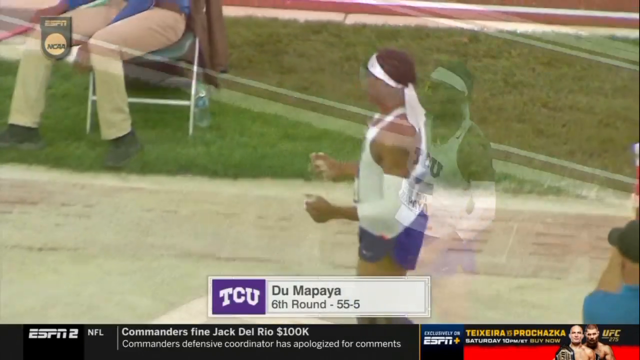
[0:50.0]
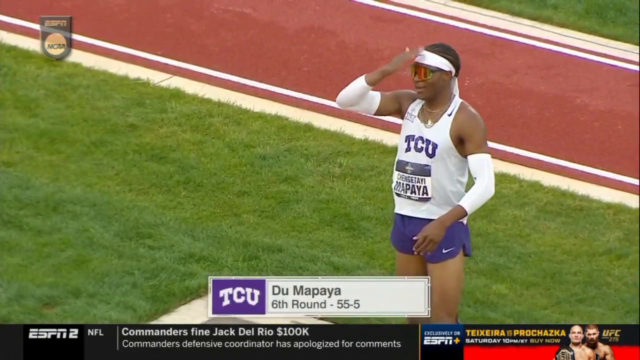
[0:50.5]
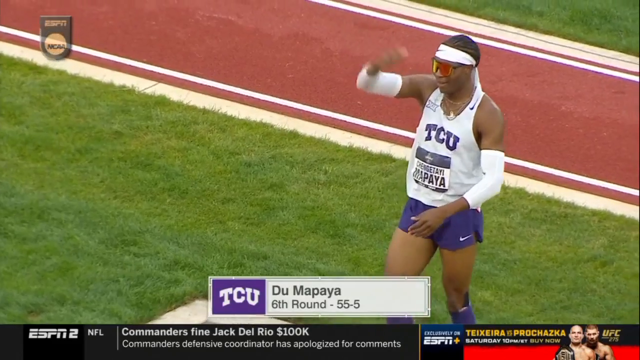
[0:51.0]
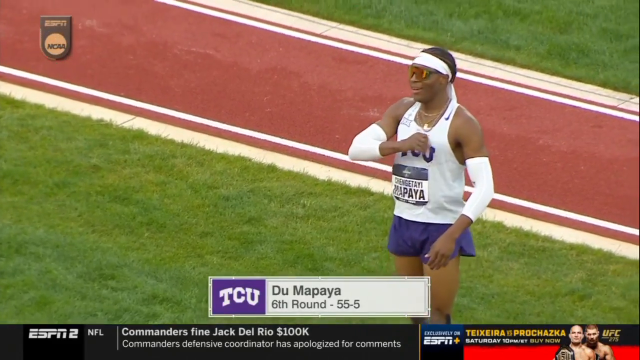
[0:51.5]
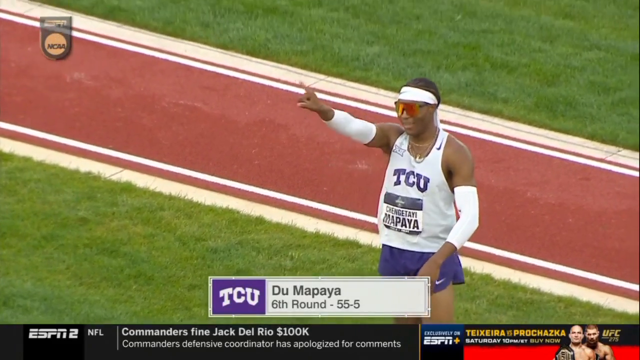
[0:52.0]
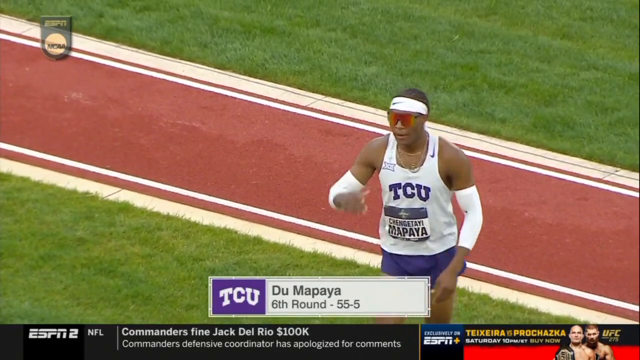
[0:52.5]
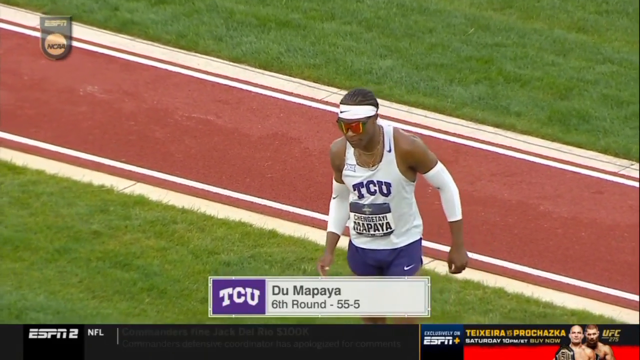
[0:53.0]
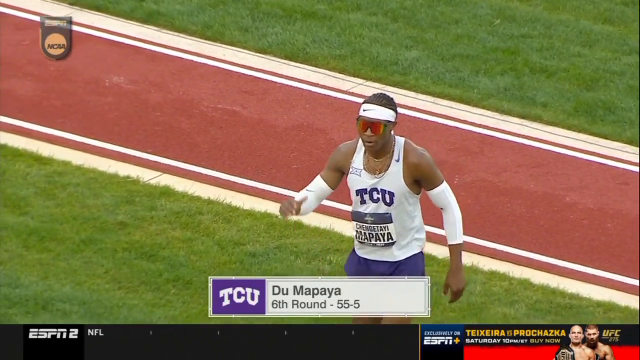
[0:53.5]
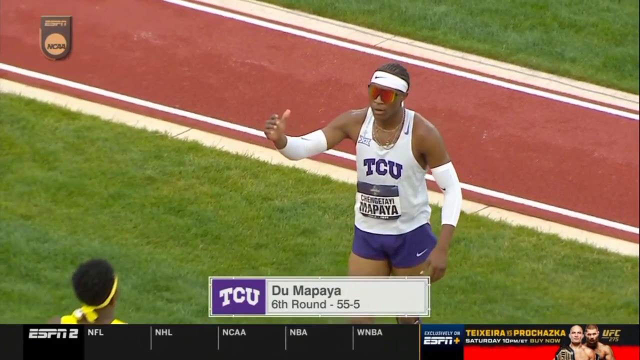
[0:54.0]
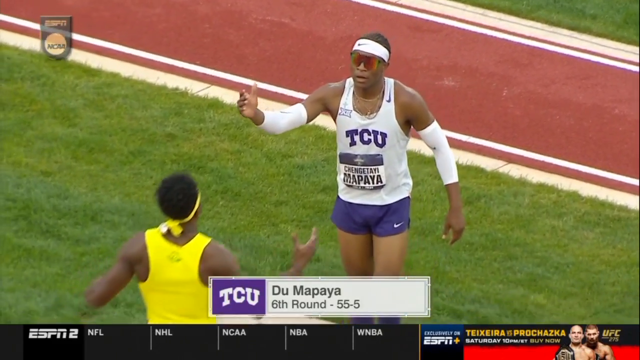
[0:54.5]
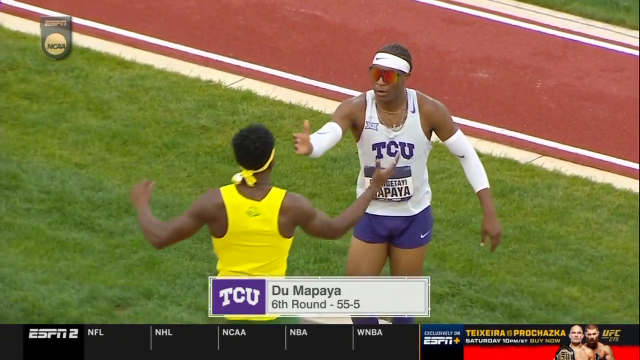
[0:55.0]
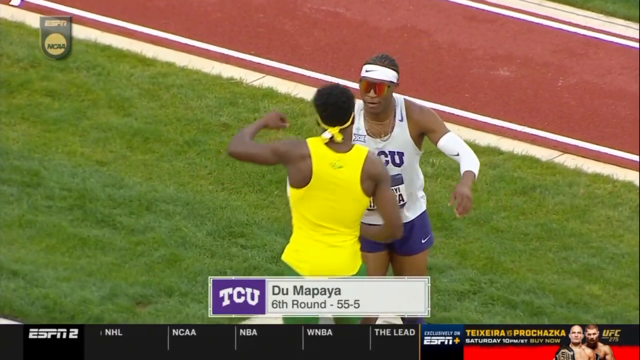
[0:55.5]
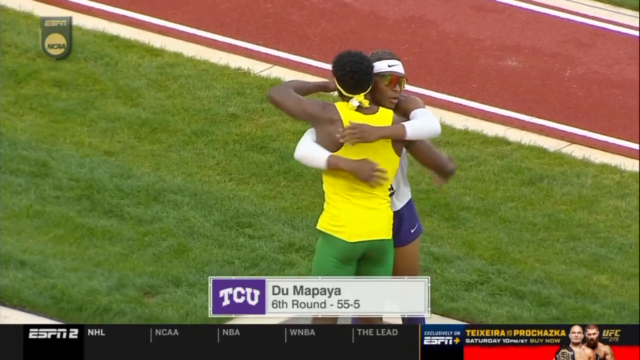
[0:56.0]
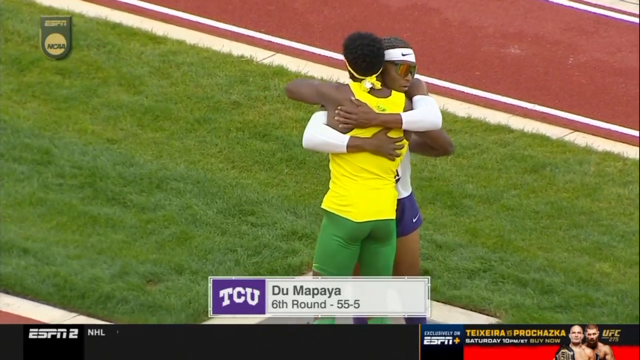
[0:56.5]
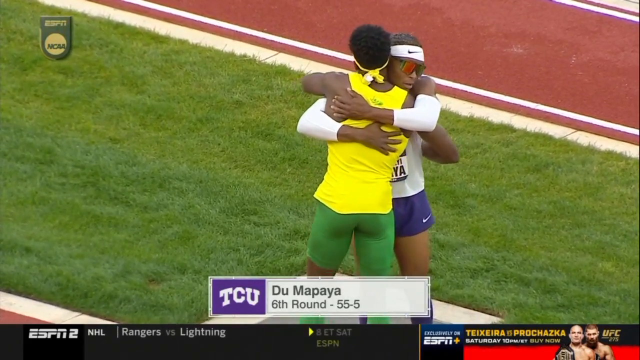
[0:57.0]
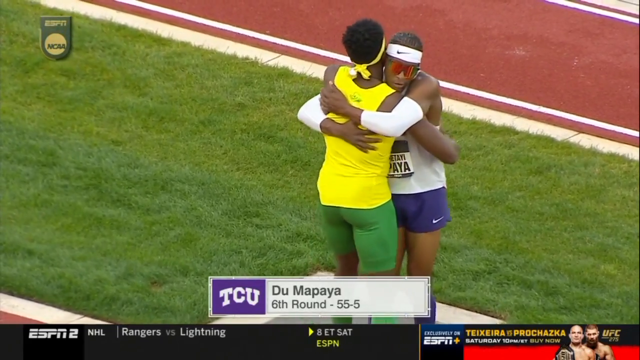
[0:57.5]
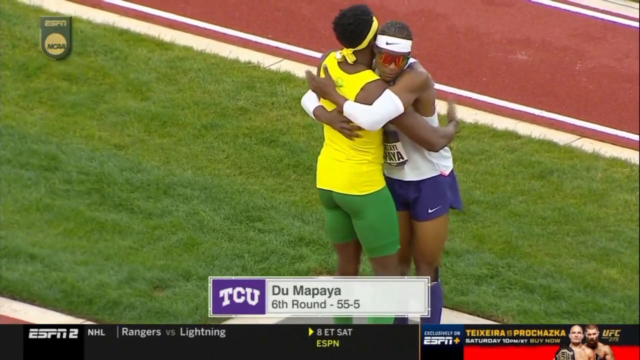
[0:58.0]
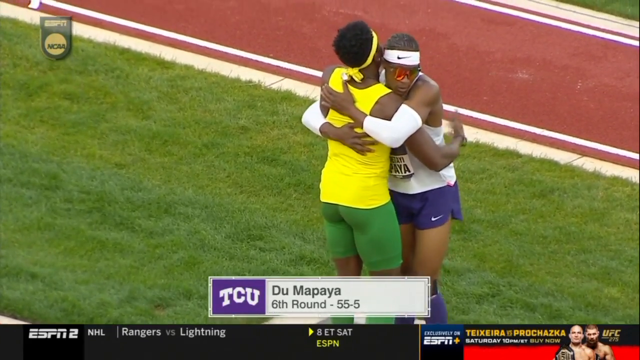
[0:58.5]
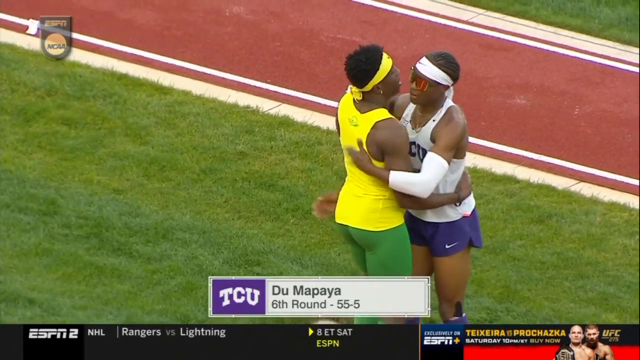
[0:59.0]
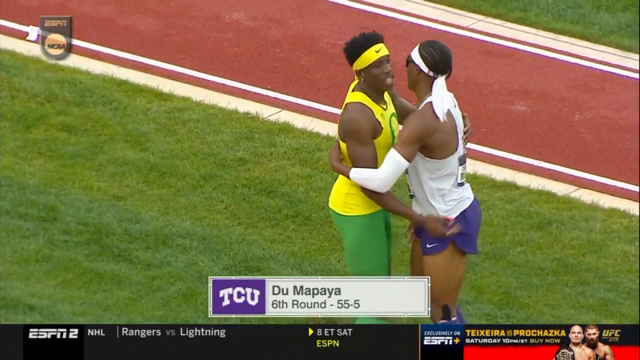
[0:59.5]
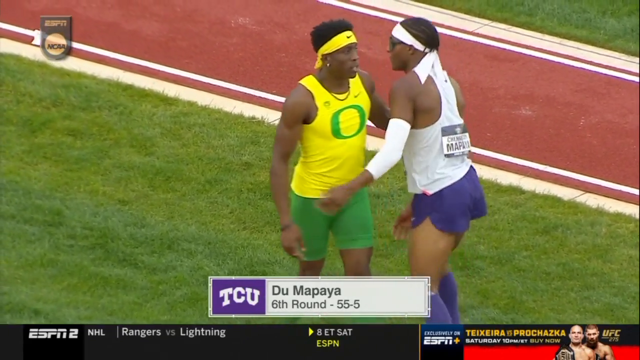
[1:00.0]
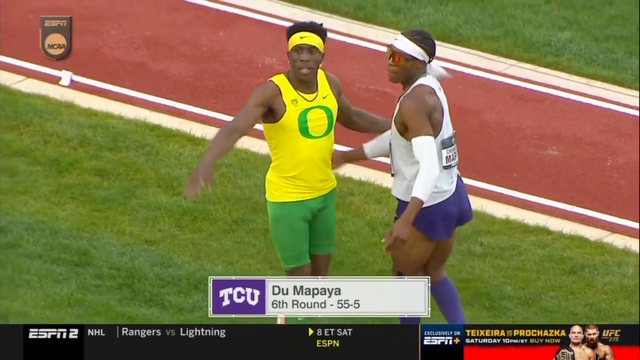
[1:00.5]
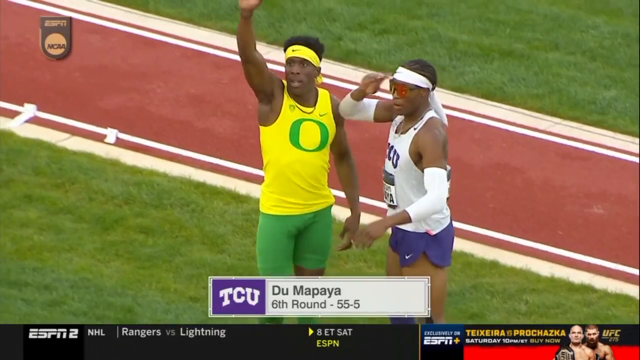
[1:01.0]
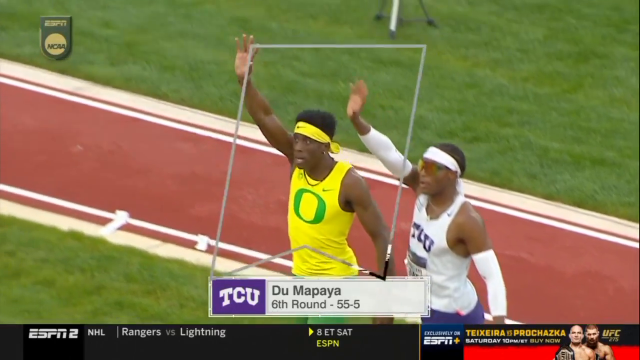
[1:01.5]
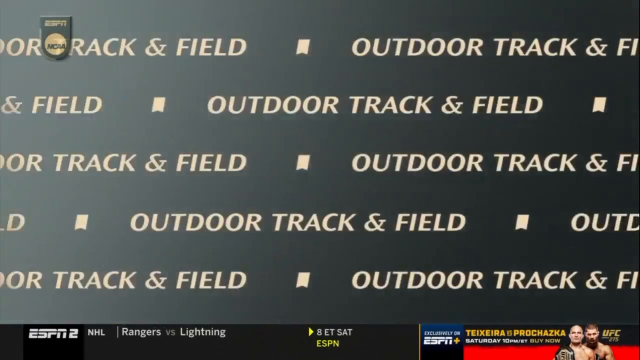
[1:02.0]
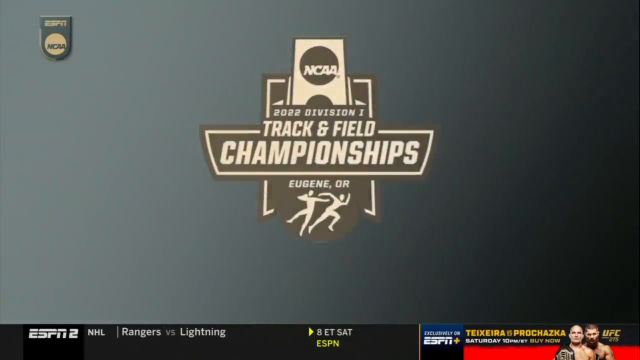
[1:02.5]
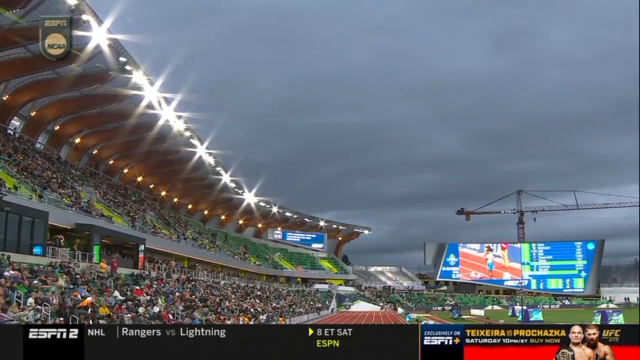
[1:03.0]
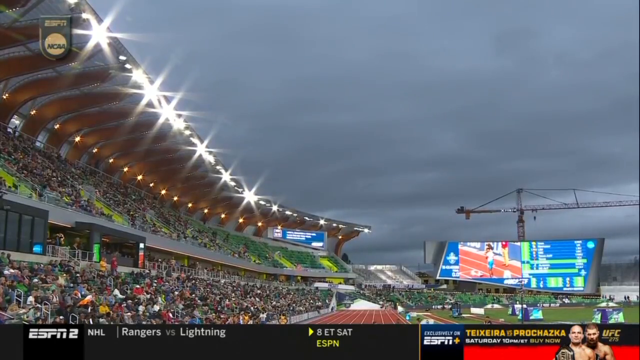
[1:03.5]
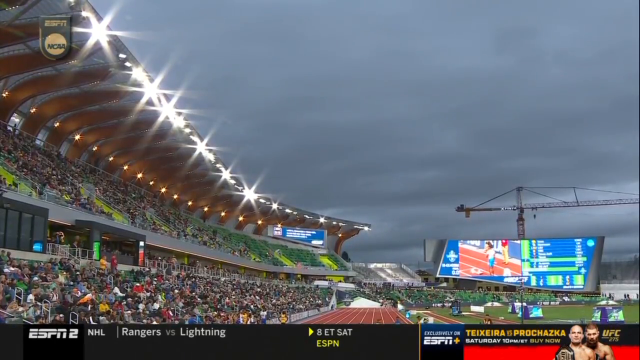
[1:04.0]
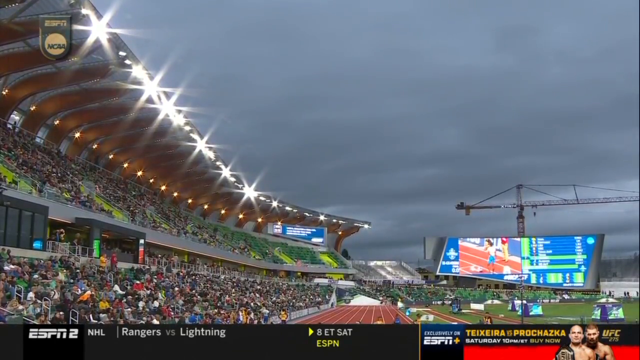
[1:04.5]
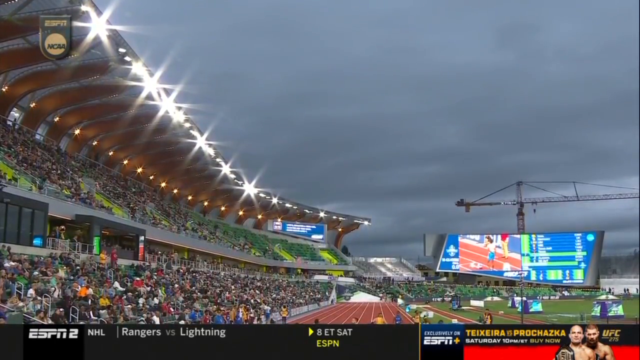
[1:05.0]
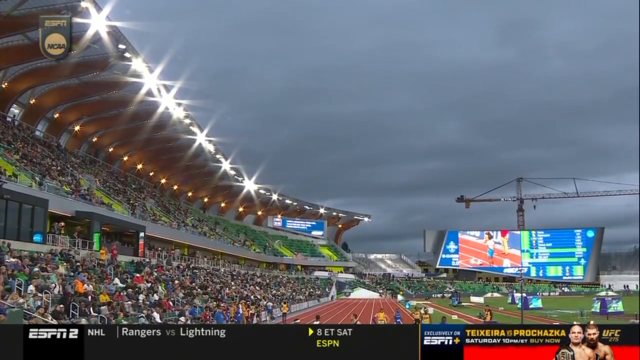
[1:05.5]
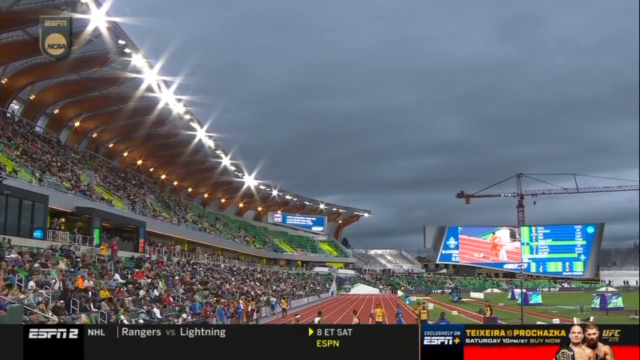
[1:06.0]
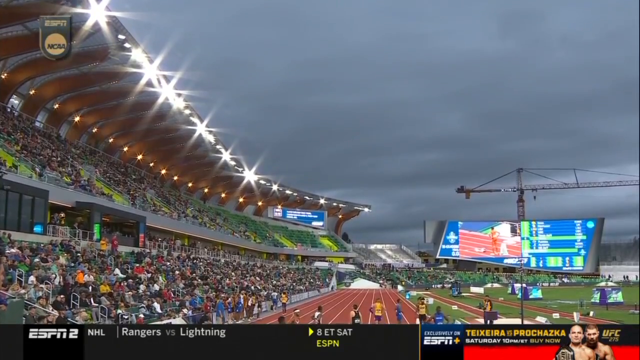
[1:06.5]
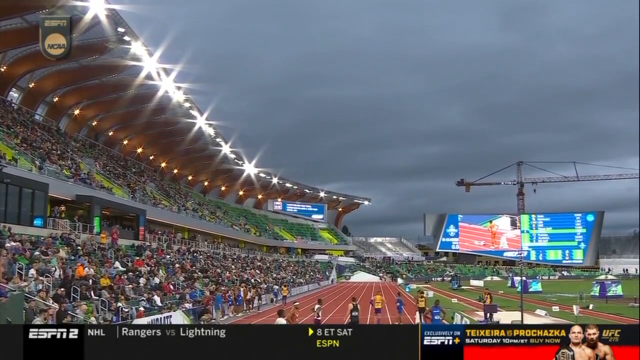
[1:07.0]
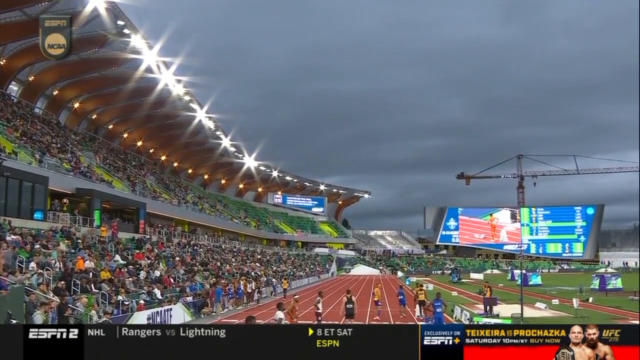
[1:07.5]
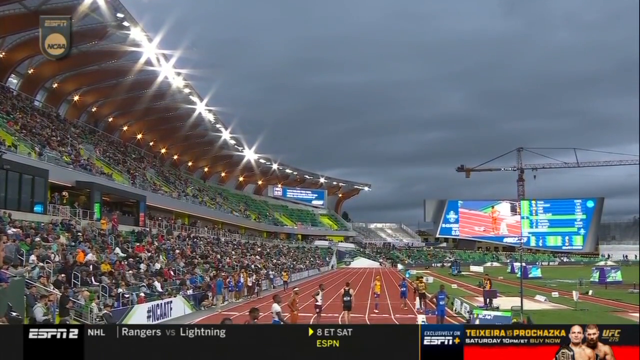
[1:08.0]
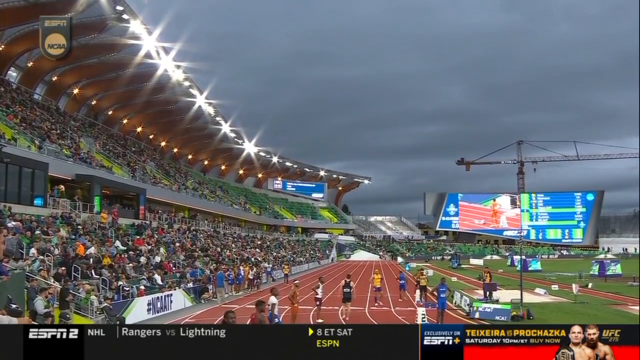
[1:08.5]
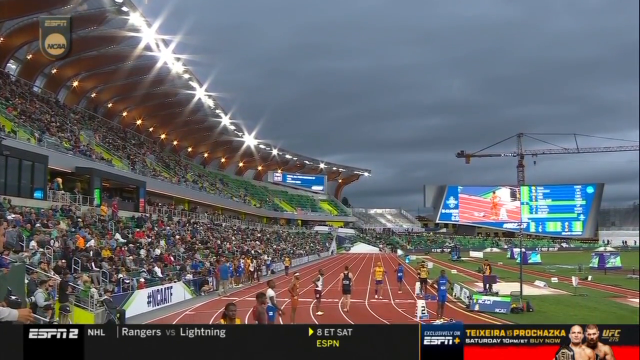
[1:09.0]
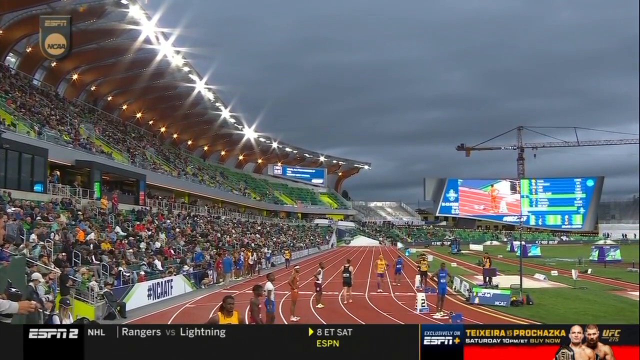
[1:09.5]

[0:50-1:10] The TCU athlete finishes his jump, gestures to the crowd, pounds his chest and lifts his fist in the air. He then hugs the earlier contestant dressed in yellow, perhaps to congratulate one another, and the two wave. A logo reading "track championships" appears, and the video cuts back to the track meet, with many spectators in the stands. It seems to be getting darker toward nightfall, the lights are coming on, and the sky is cloudy. The text "outdoor track and field championships" appears as a transition from one event to the next, and the logo that flashes in between states that the event is taking place in Eugene, Oregon. ESPN markings remain at the bottom. Multiple runners are on different parts of the lanes, apparently lining up for a different event, possibly a race.